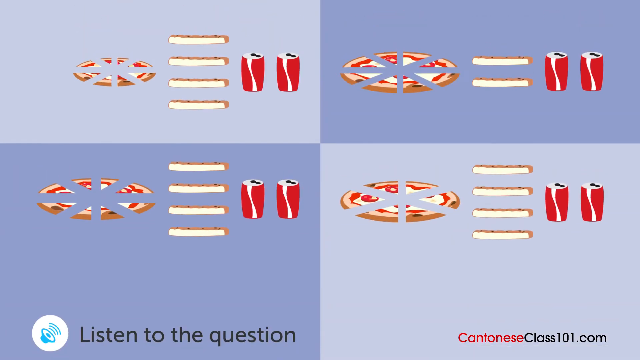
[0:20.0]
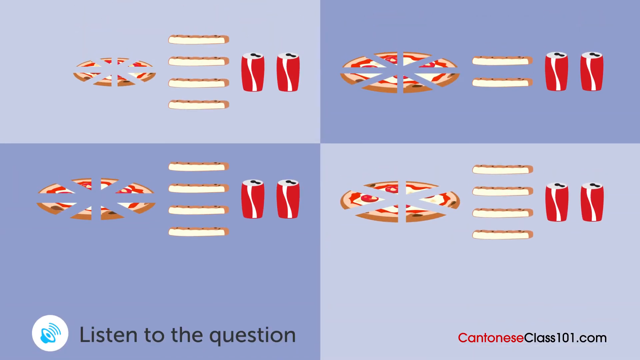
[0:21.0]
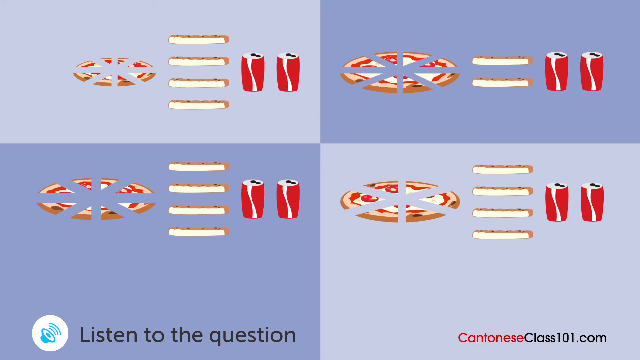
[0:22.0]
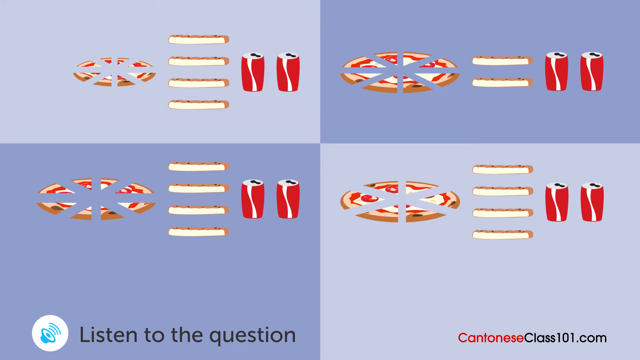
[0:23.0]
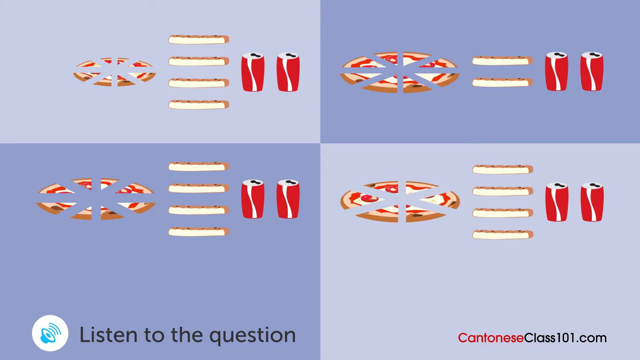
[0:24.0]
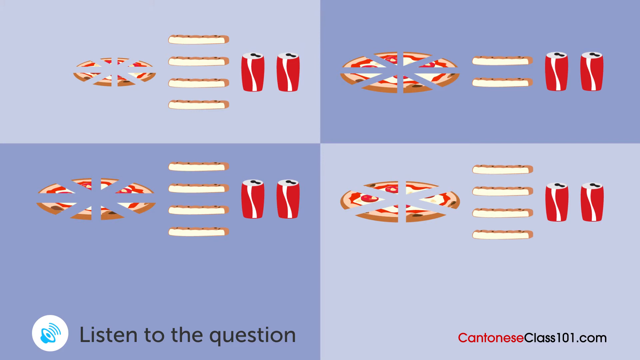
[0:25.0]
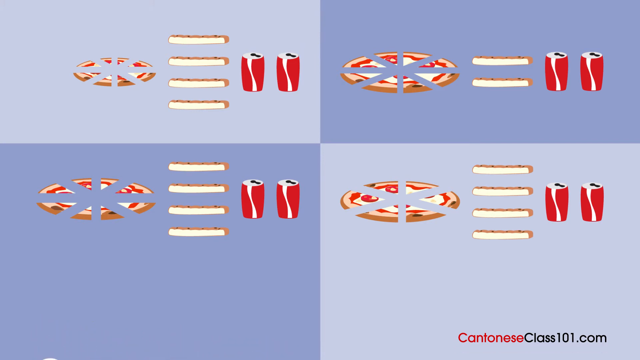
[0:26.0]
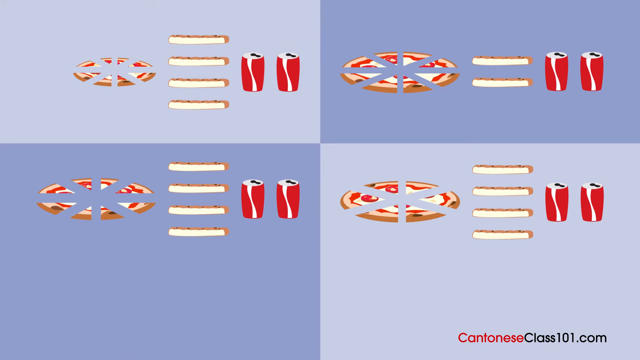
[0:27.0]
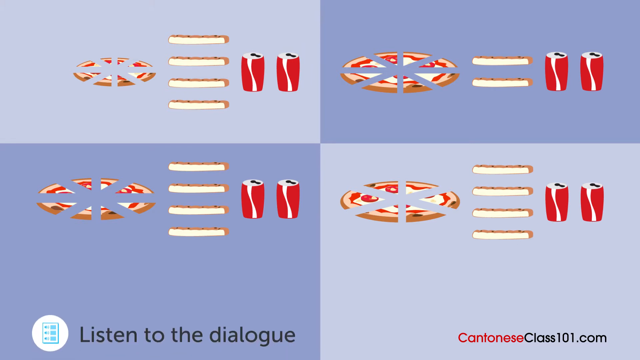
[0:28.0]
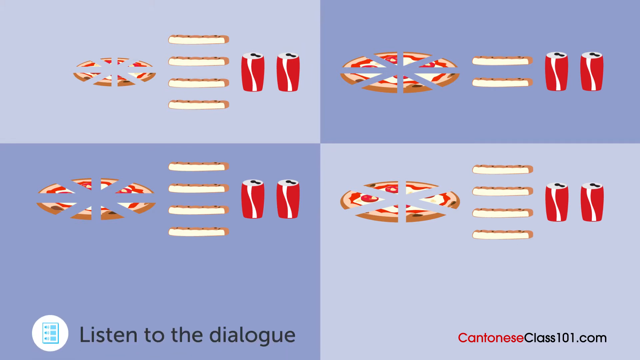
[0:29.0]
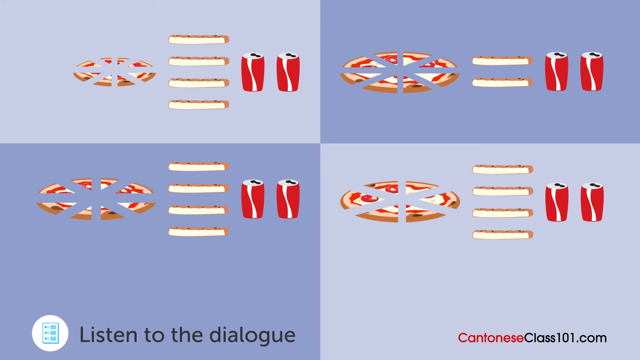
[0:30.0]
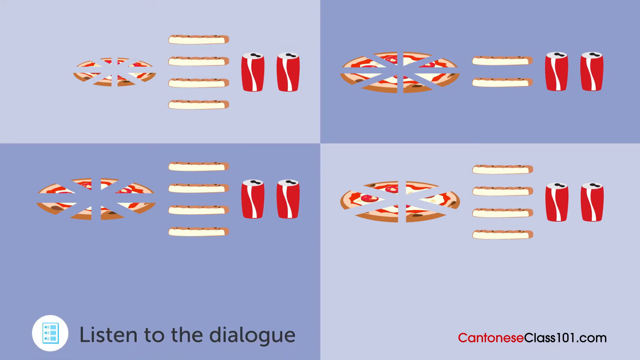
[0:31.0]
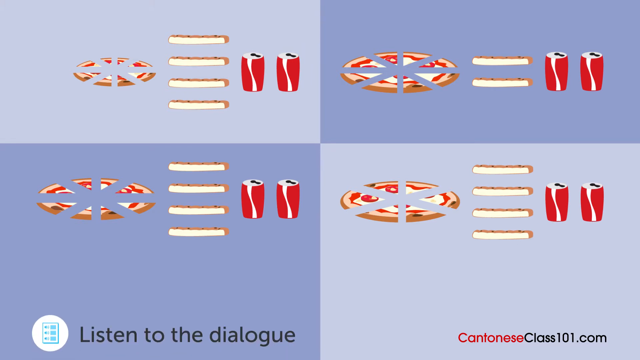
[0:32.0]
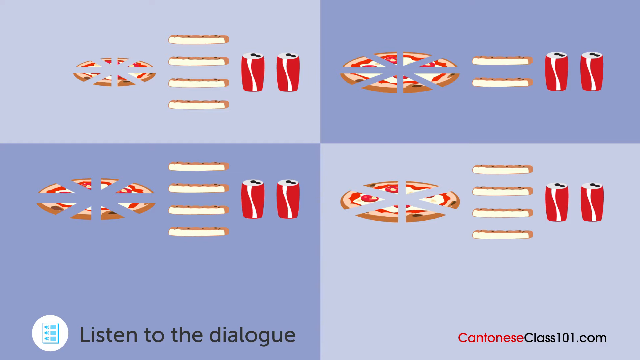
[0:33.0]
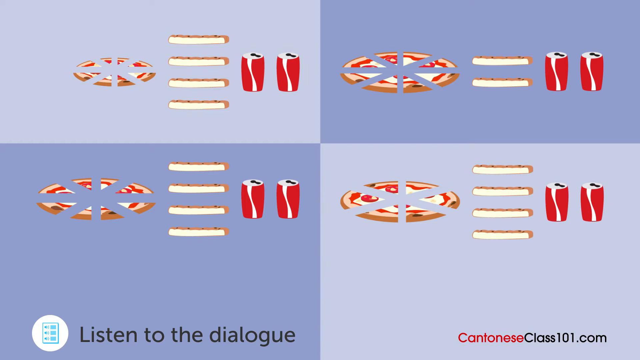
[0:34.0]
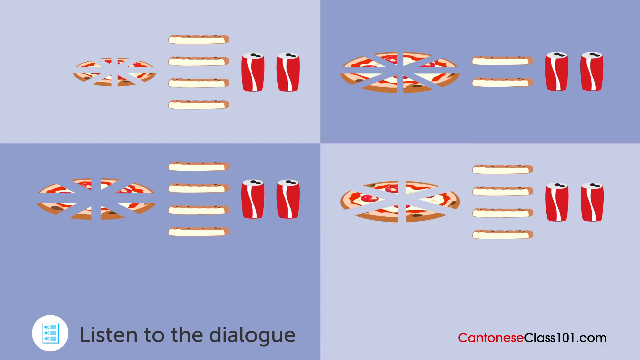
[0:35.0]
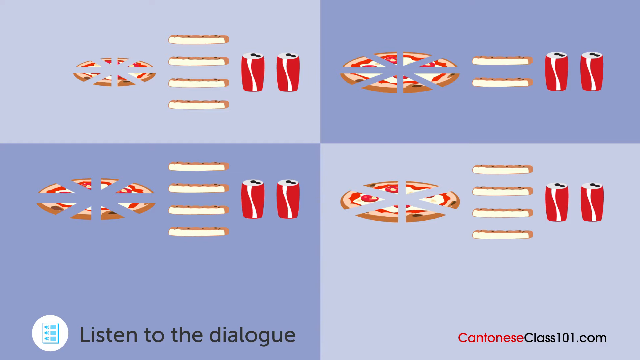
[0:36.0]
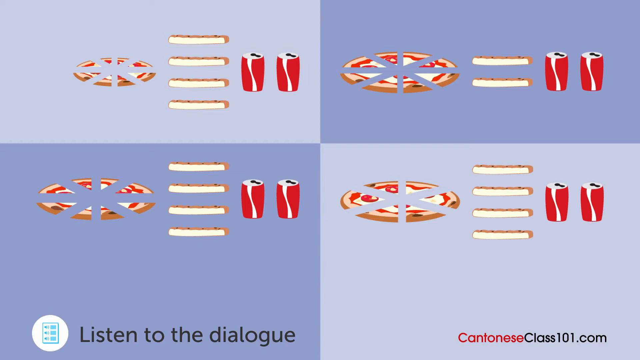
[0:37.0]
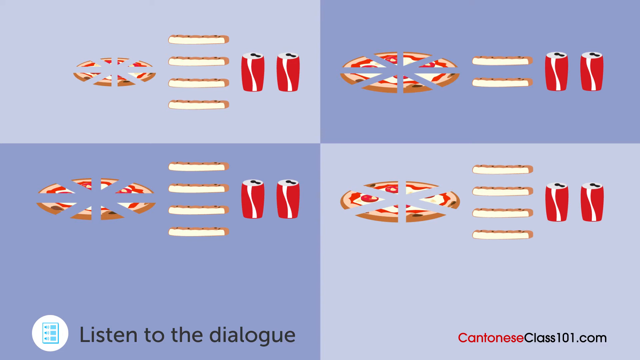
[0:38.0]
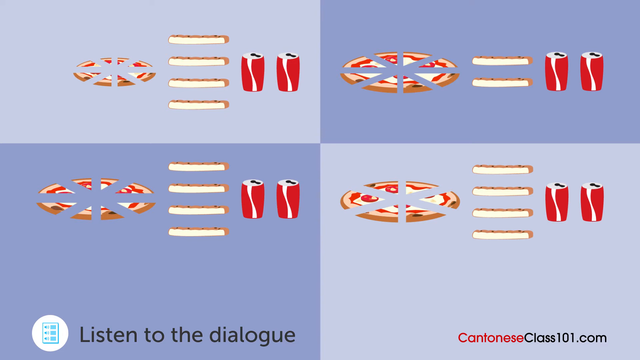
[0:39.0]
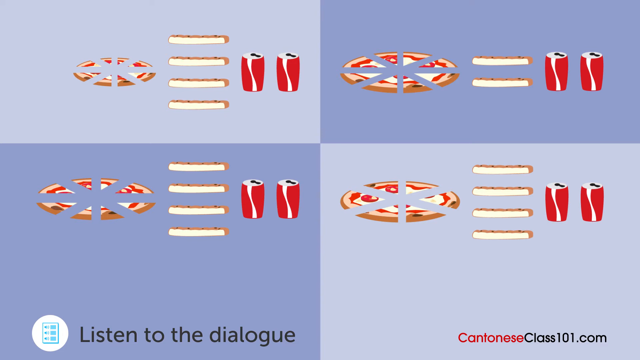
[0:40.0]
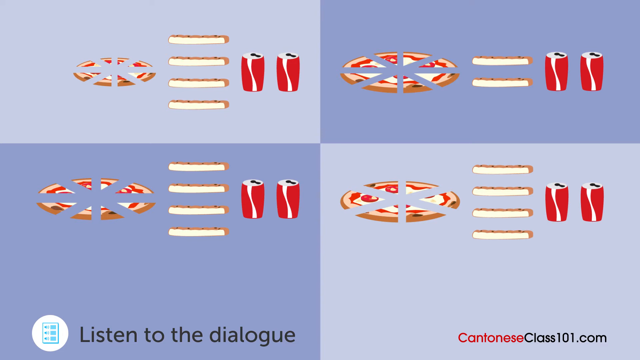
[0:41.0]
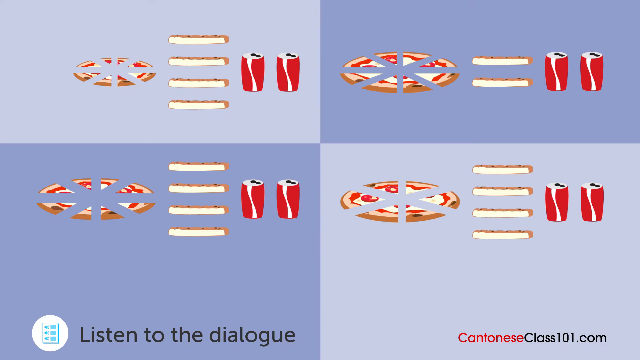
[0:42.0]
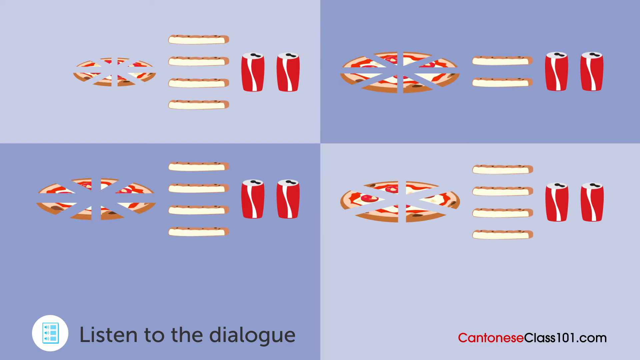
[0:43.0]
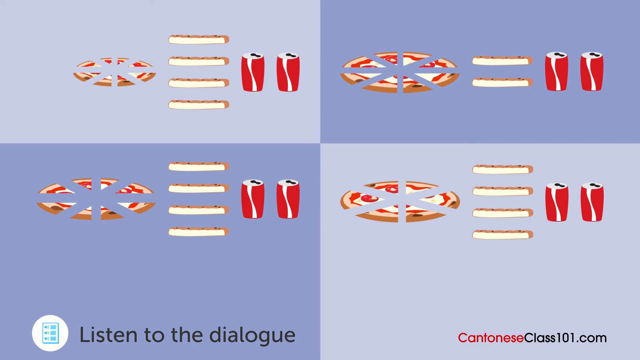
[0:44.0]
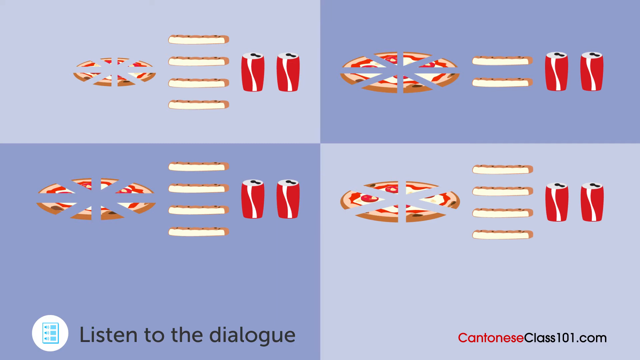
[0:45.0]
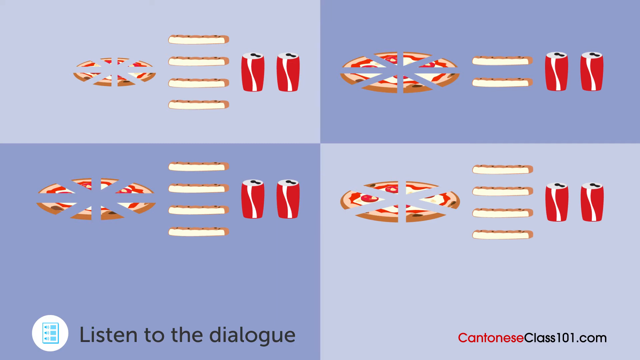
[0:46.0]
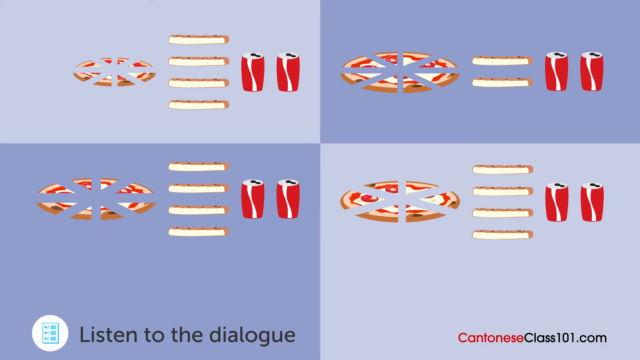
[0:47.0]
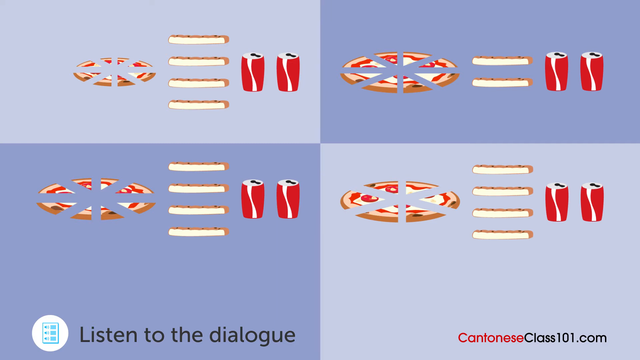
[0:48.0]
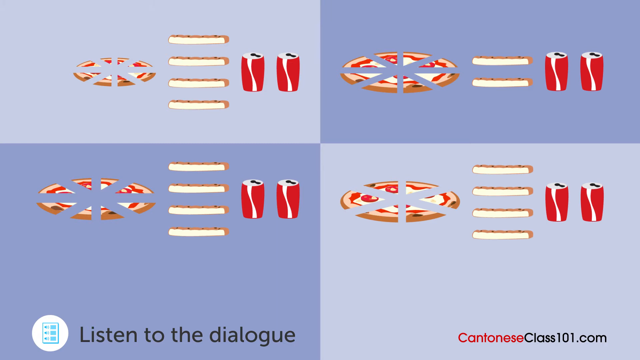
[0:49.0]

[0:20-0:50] The four images with pizza and cold drinks are on screen. The pizza is cut up and the cold drinks are on the sides; each of the four images has two cans of cold drink. An instruction at the bottom reads "listen to the question," and then the next instruction pops up: "listen to the dialogue." The first picture has four slices in the middle, the second has two slices in the middle, the third has four slices in the middle, and the fourth has four slices in the middle.